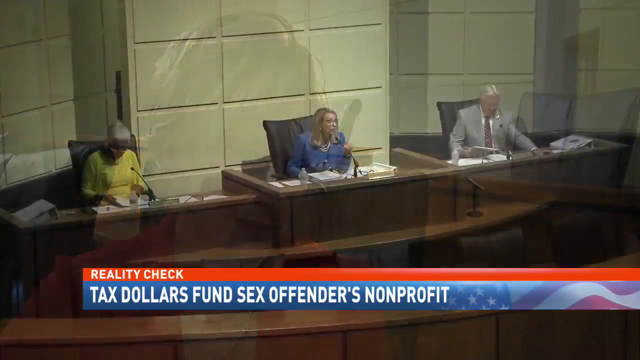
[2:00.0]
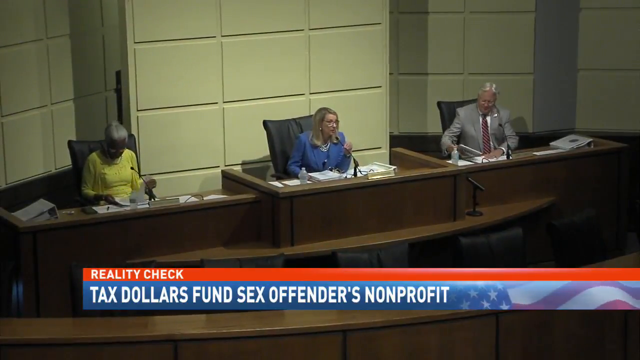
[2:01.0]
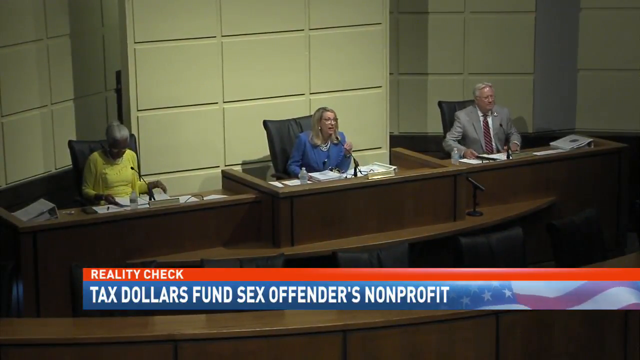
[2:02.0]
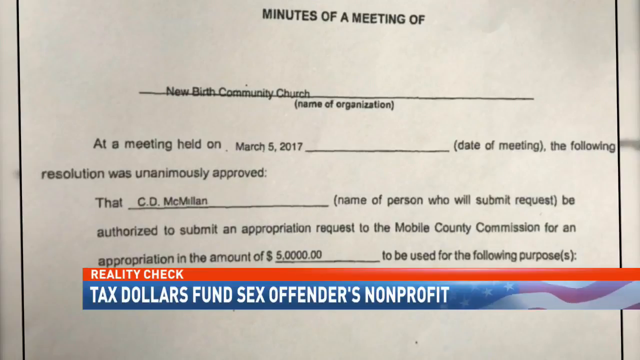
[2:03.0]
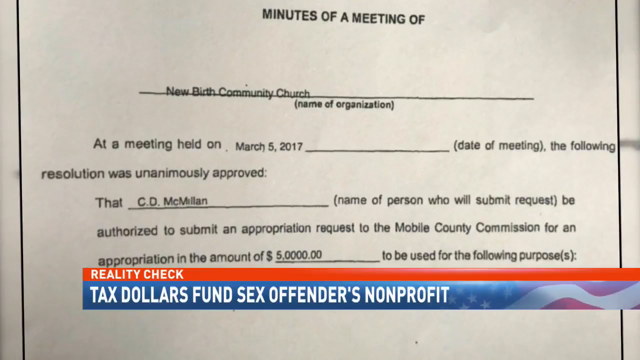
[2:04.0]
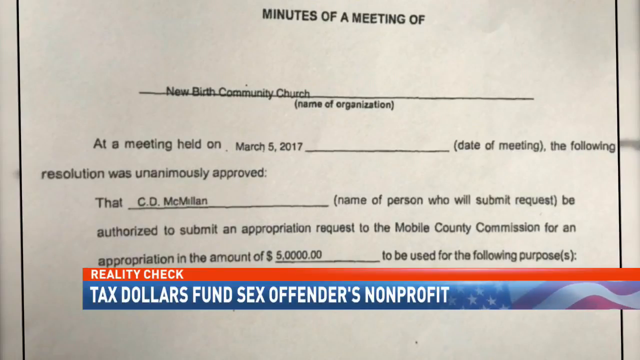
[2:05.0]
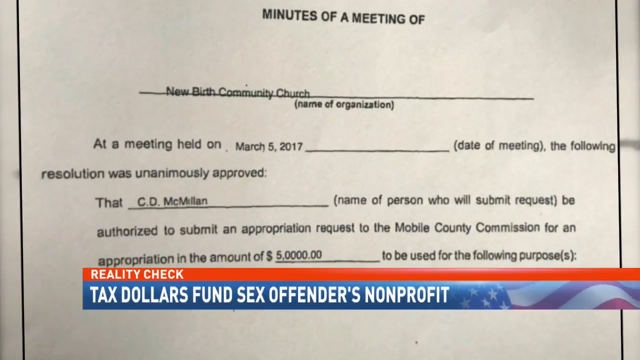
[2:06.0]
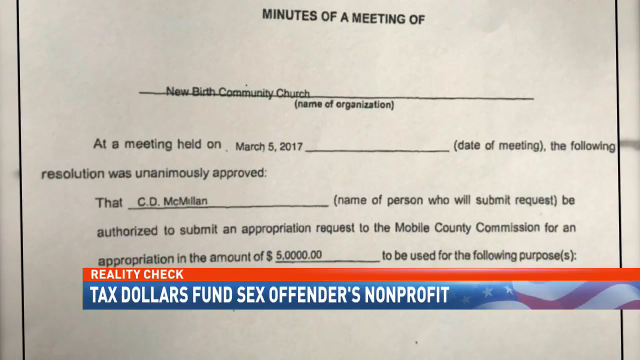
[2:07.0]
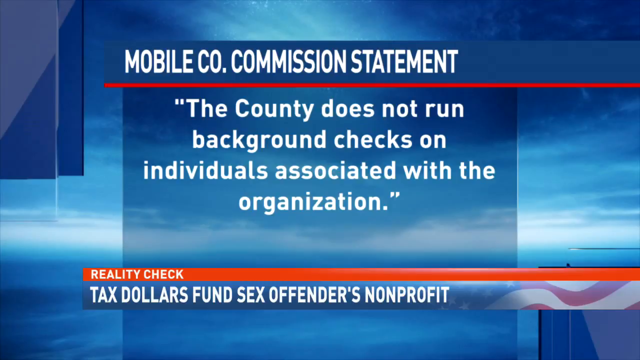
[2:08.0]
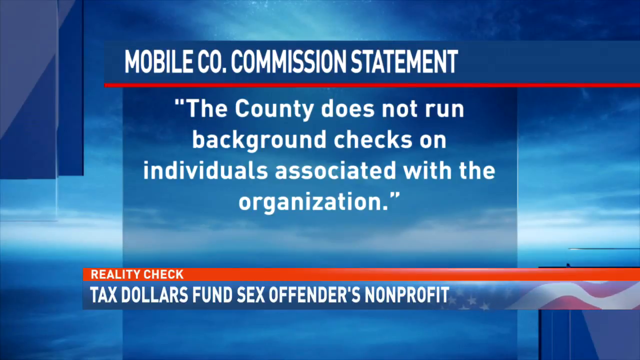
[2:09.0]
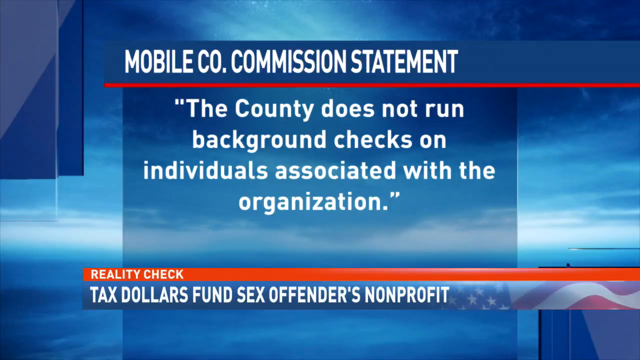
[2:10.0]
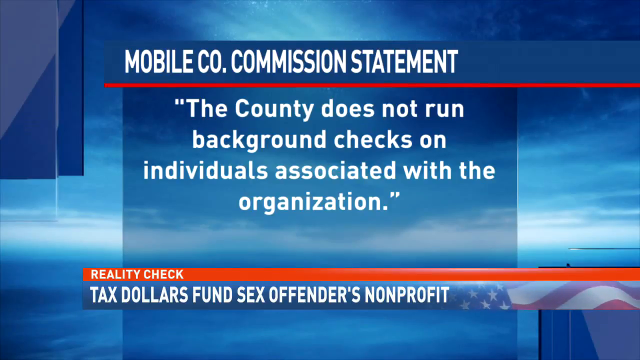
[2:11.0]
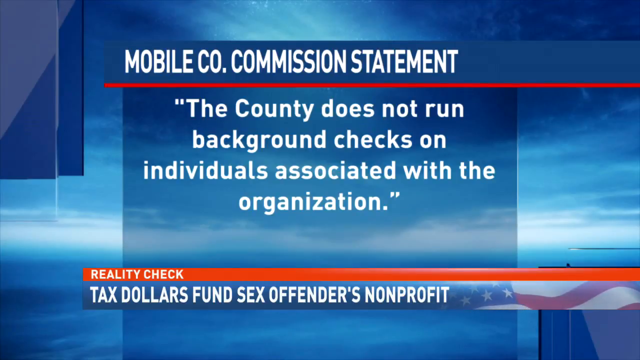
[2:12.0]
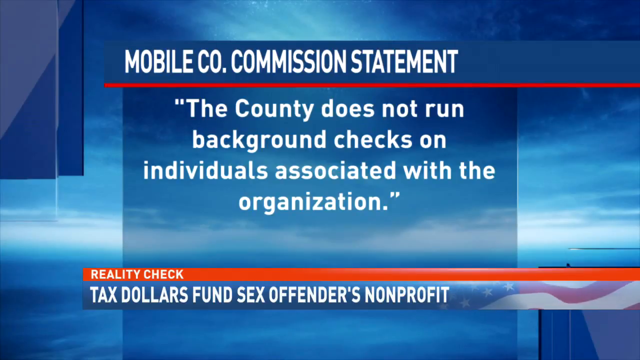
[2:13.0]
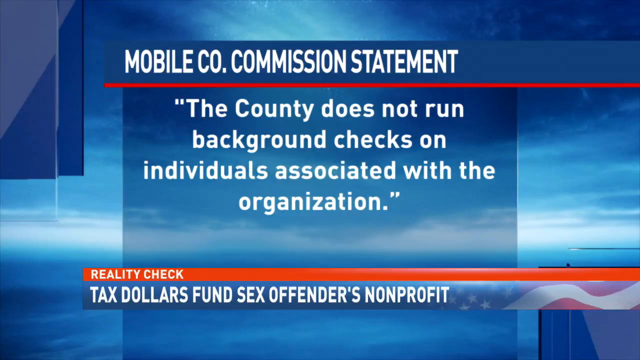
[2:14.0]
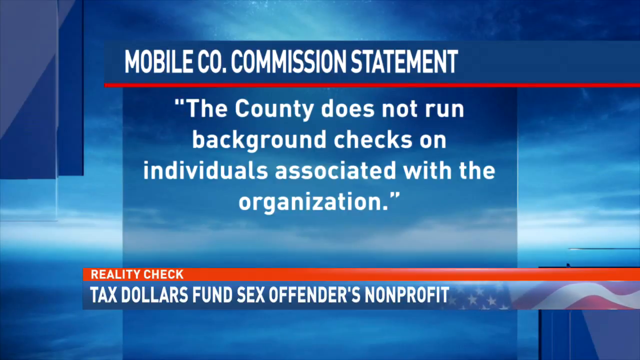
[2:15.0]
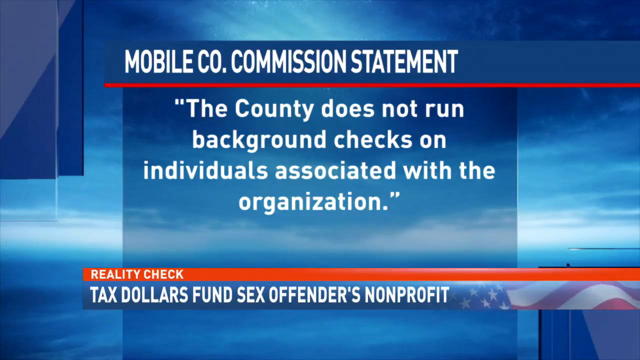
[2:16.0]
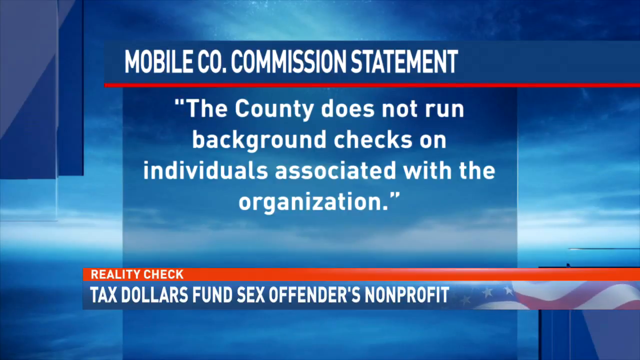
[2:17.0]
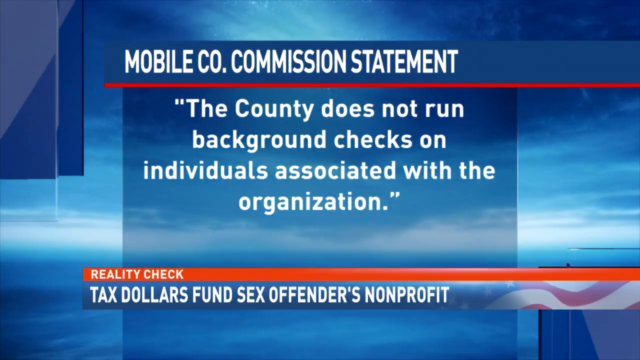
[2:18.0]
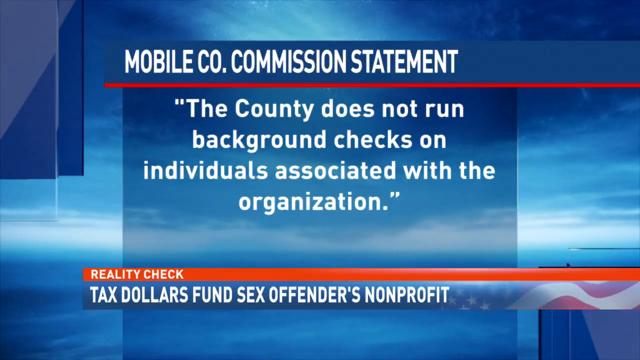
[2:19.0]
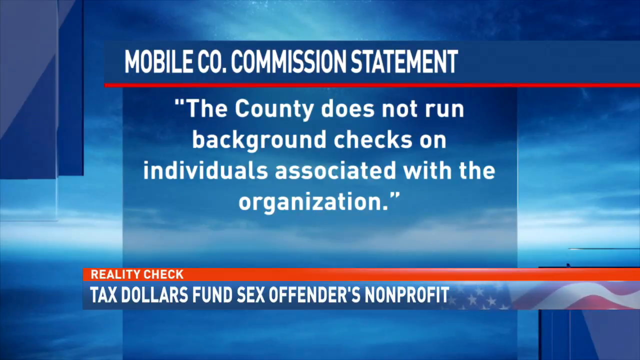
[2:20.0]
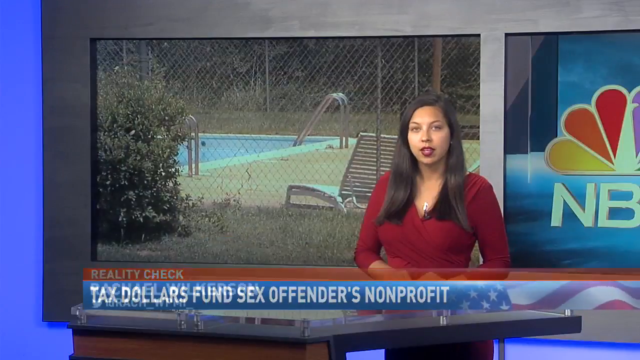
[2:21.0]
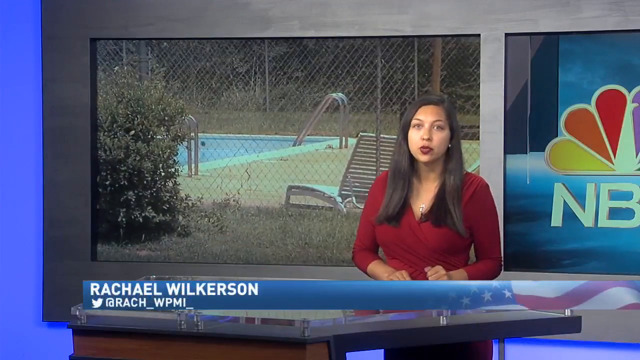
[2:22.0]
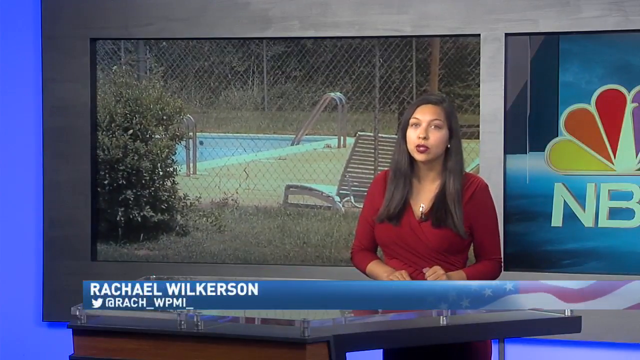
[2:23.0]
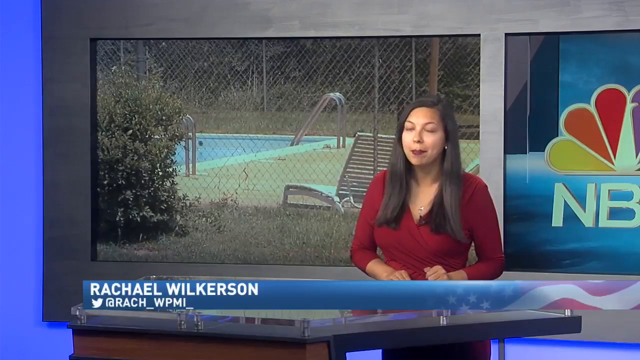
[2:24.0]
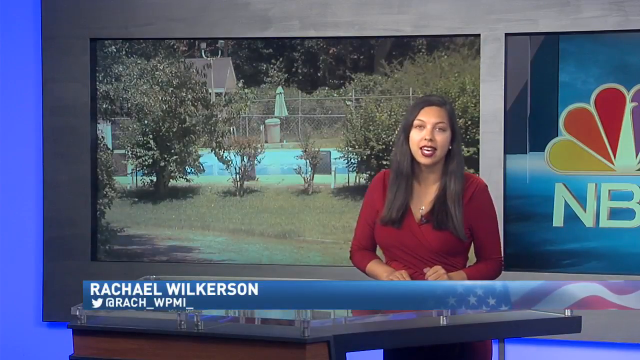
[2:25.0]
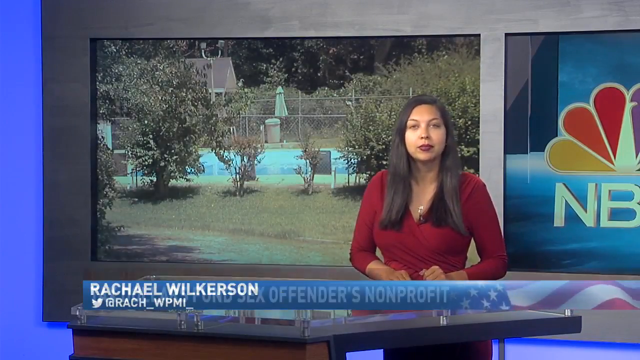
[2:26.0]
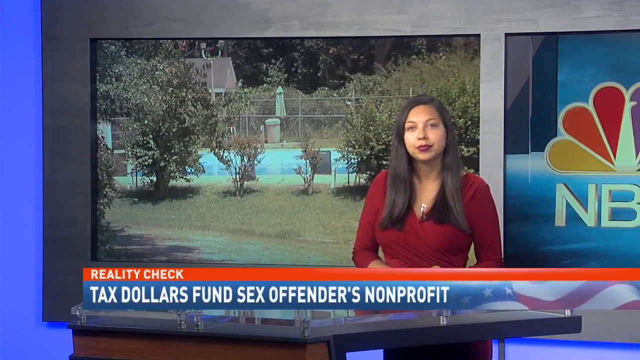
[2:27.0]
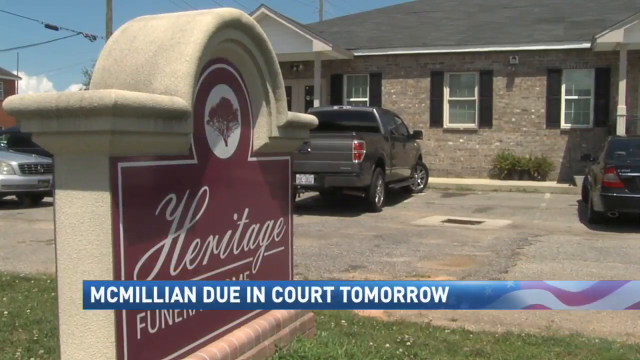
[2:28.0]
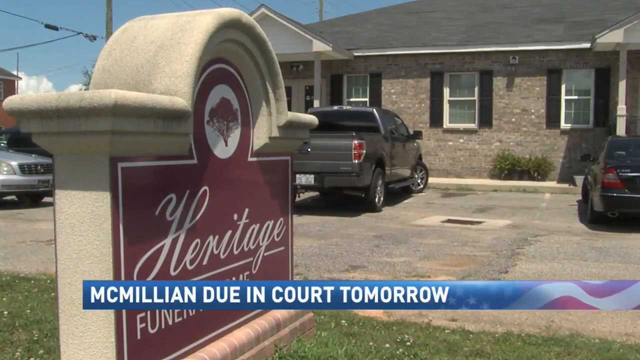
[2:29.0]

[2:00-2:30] Three council members are up on the highest part of the podium. An older African American woman in a yellow dress fidgets with her papers, and an older Caucasian woman in a blue business suit, with glasses and long blonde hair, speaks into the microphone while grasping its handle. Next is an older Caucasian man with short white hair, a red tie and a light gray business suit, messing with his papers, with a water bottle to his right. Each of the three podiums is separate. The scene switches to the minutes of the meeting, showing a New Birth Community Church paper that includes the date and that C.D. McMillian is authorized to submit an appropriation request to the Mobile County Commission for an appropriation of the amount of $5,000, with the reality check banner in the far front. Then a statement appears on a dark blue and light blue background, a Mobile Commission statement reading "the county does not run background checks on individuals associated with the organization." It goes back to Rachel Wilkerson, with her tweet name at the bottom; she wears a red long-sleeve shirt and a necklace and has long brown hair, and a large television in the background shows the pool. The next scene shows a dark maroon heritage sign on an ornate cement block that shows a tree, with a building in the background that has three visible windows and a double door on the left, plus a silver truck and a black sedan.